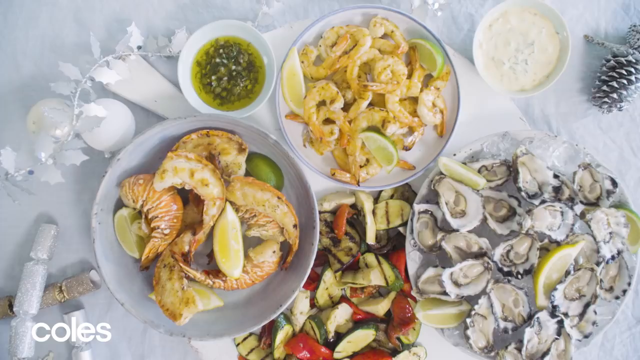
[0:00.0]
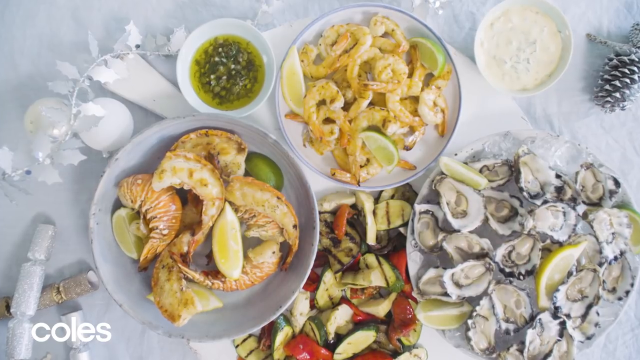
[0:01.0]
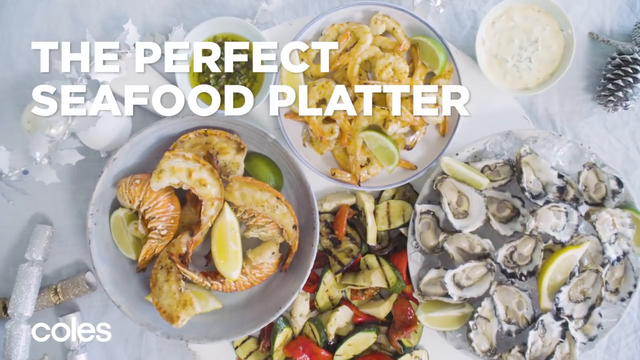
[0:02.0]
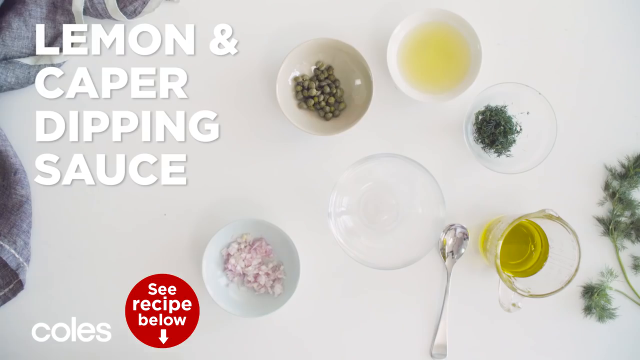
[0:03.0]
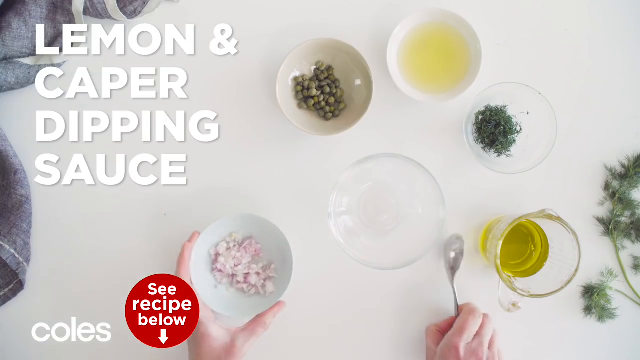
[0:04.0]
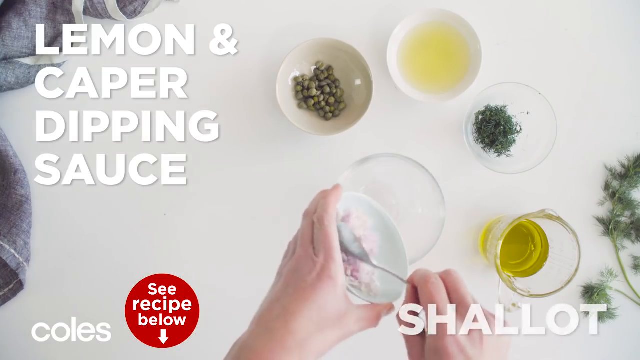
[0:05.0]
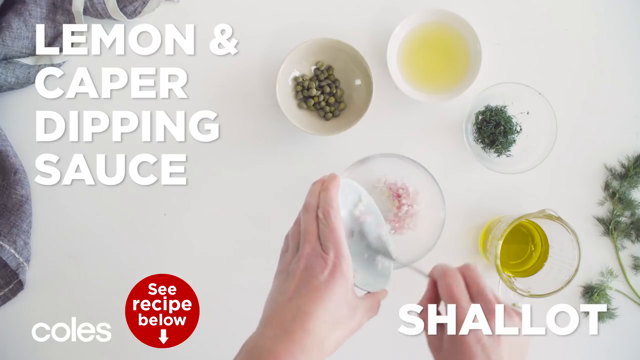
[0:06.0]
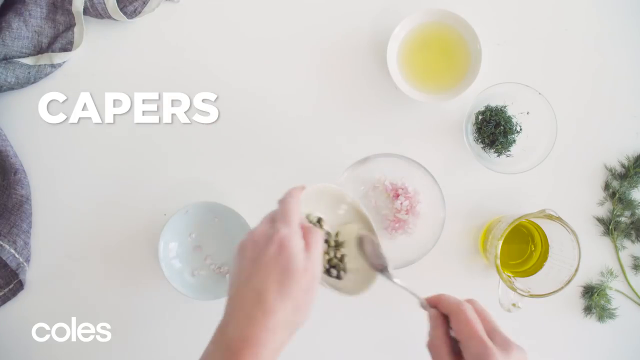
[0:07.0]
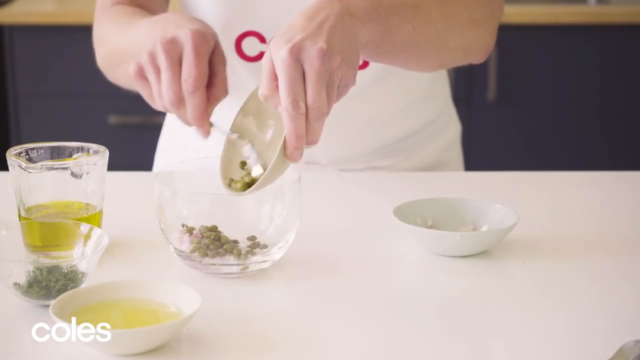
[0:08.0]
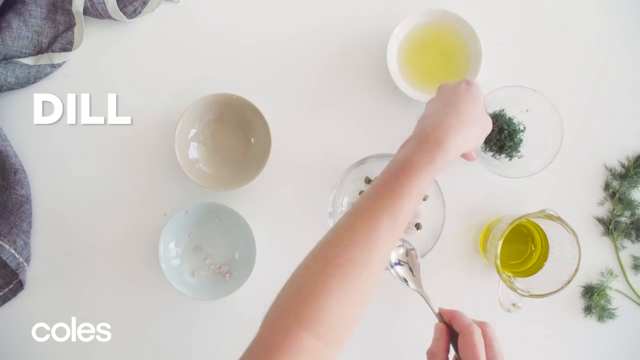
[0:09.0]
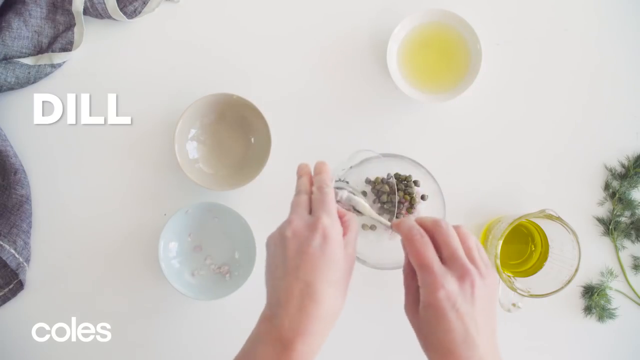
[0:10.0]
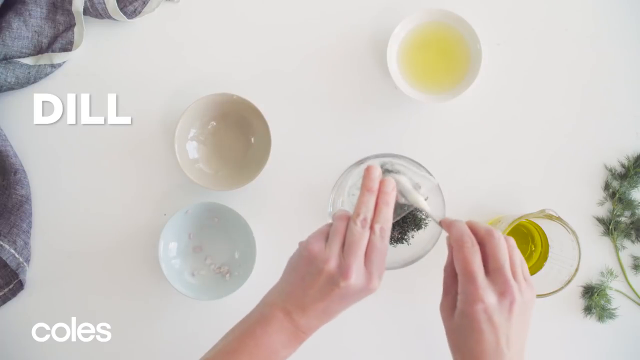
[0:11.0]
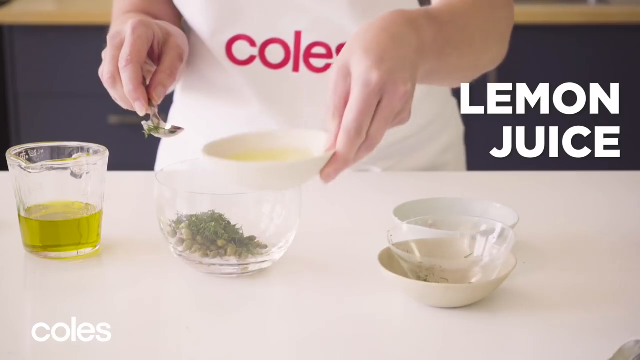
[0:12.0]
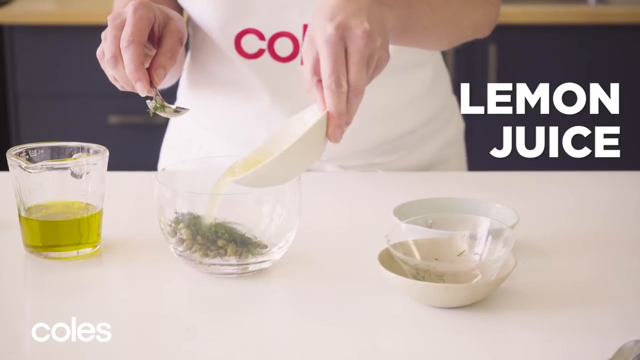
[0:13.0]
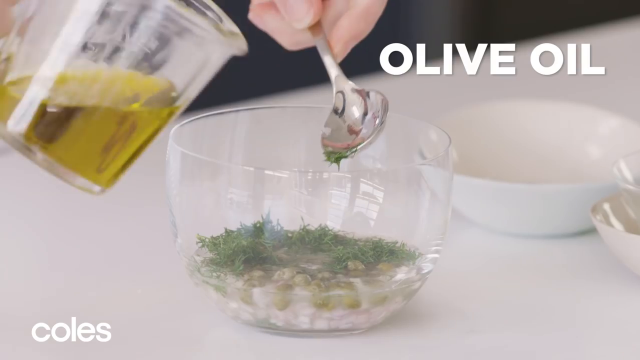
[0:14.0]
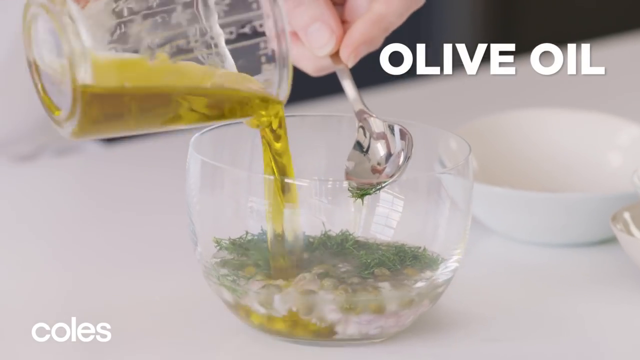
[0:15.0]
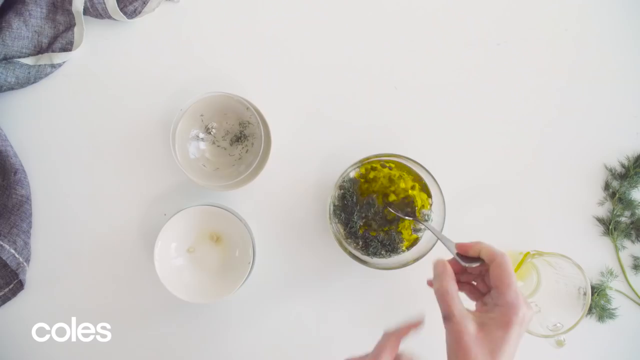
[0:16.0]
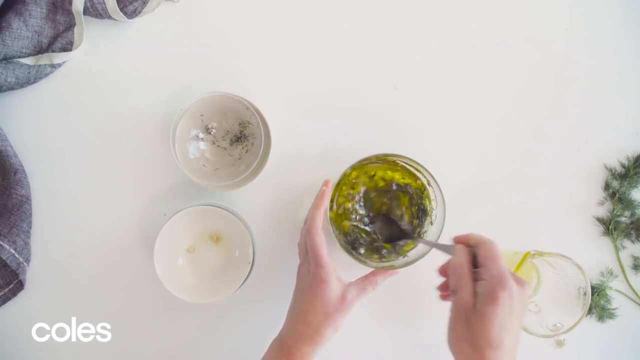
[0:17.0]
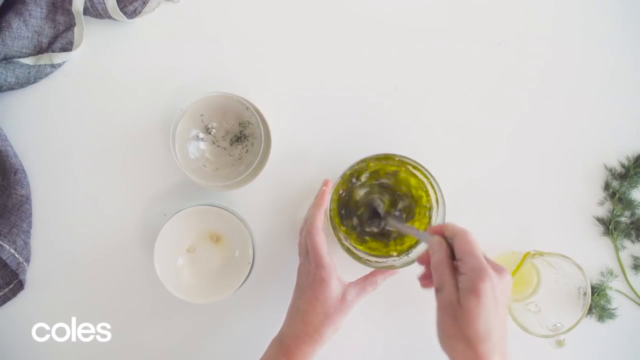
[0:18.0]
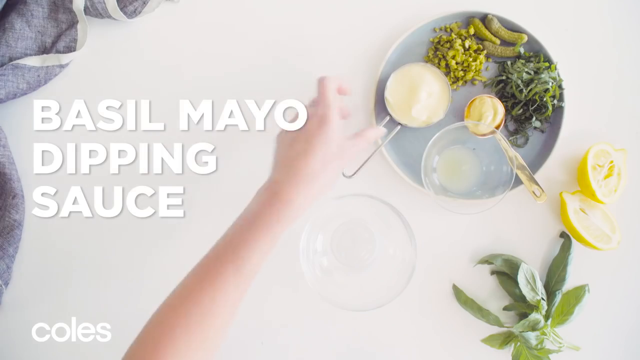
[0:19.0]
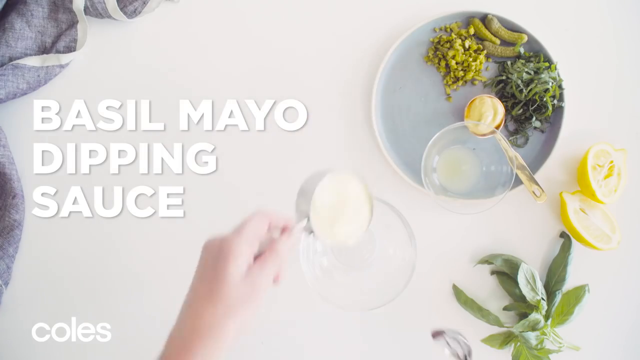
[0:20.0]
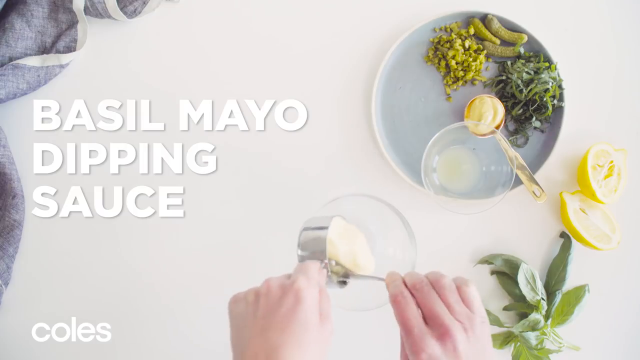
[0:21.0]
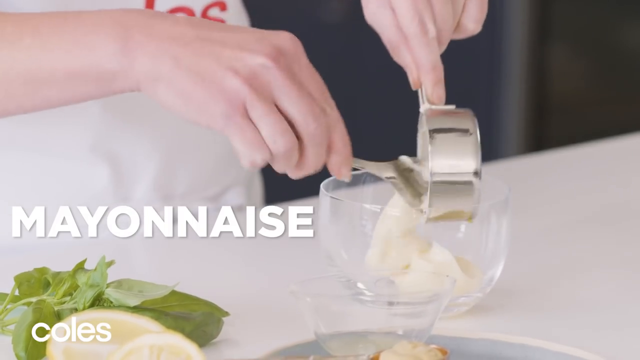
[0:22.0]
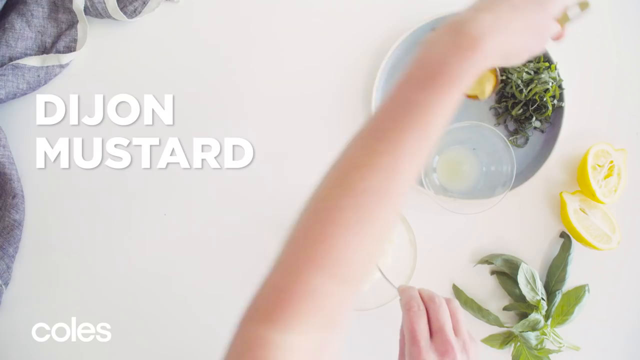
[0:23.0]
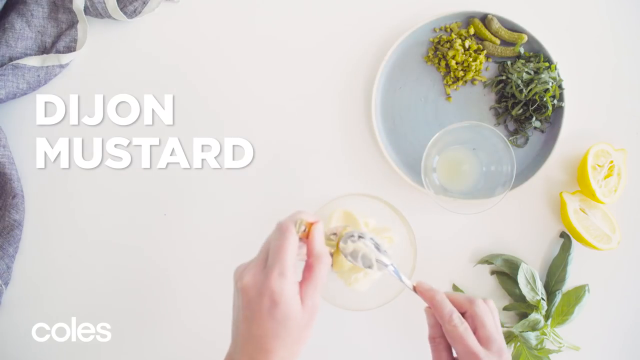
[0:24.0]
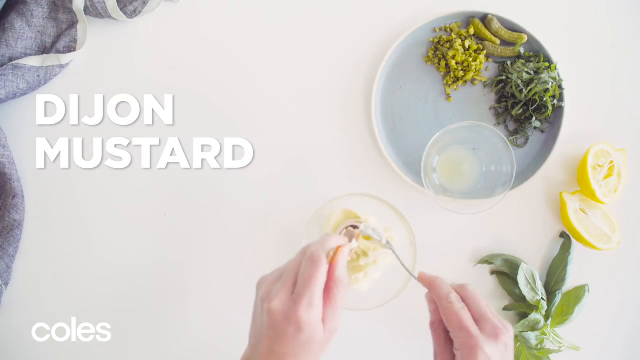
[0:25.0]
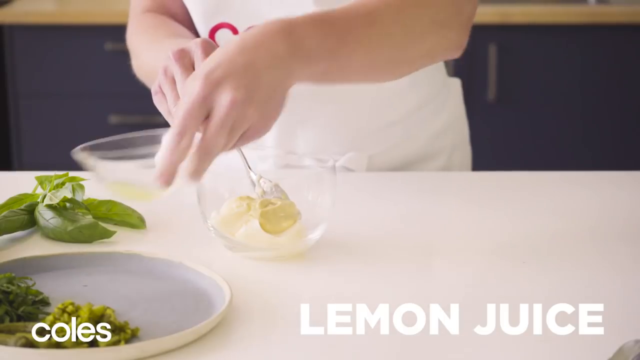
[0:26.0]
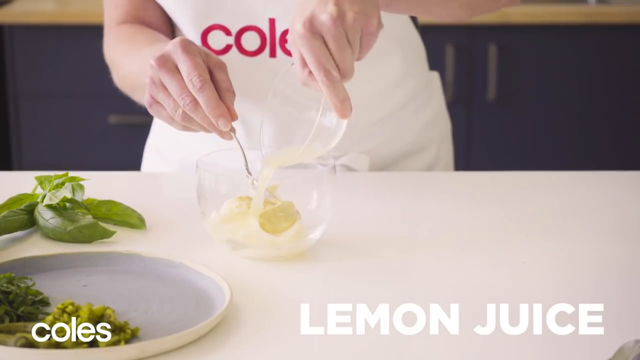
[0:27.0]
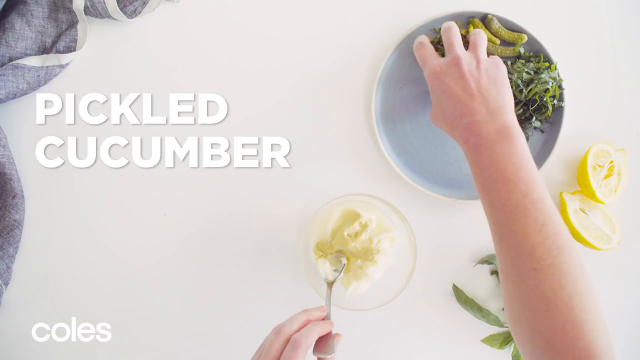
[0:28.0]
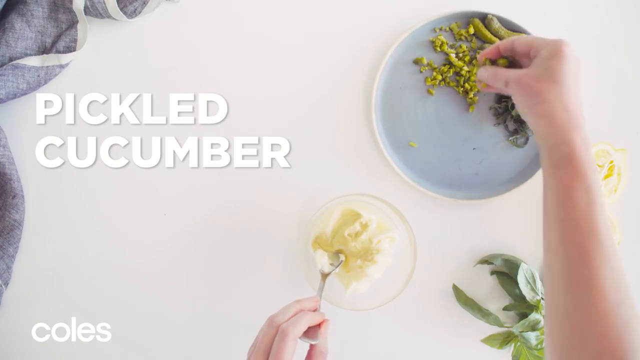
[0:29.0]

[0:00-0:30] A still photo slowly zooms in on what looks to be a spread of seafood on plates and in bowls, and the caption "the perfect seafood platter" appears on top. The video then transitions to what looks to be the steps in making a seafood platter. A caption reads "lemon and caper dipping sauce" as it is put into a bowl. Capers are shown and put into the main bowl. Dill is captioned, and from a top-down view the chef's hands put dill into the main bowl. The perspective flips as lemon juice is shown and the person adds lemon juice from a bowl into the main bowl. Olive oil is also added to the main bowl, and from the top the mixture is stirred around and dipped into. A new main bowl is labeled "basil mayo dipping sauce", and the sauce is scooped into the main bowl from a container. Dijon mustard is scooped in from a spoon, and lemon juice and pickled cucumbers are added to the main bowl next.